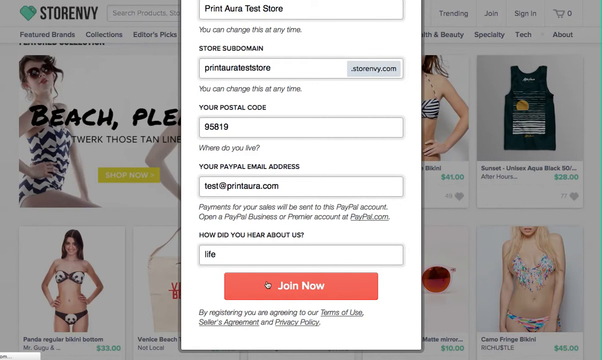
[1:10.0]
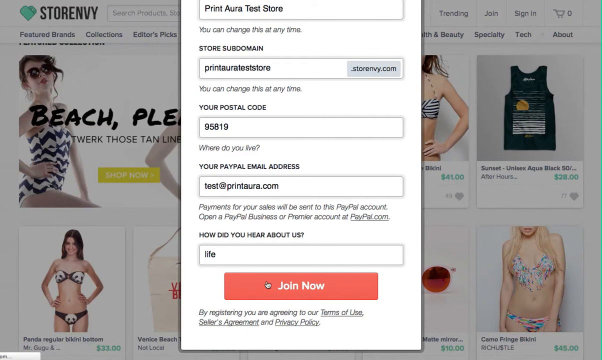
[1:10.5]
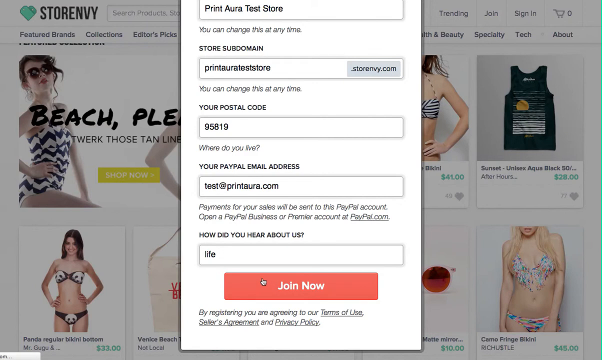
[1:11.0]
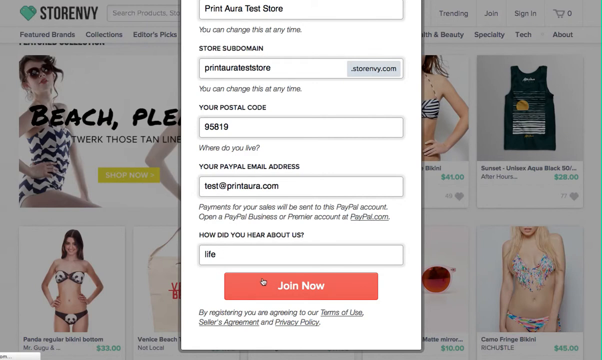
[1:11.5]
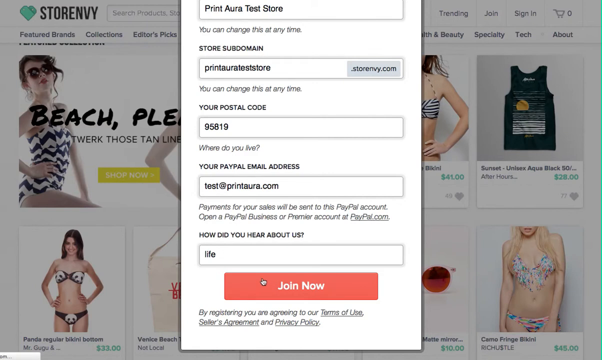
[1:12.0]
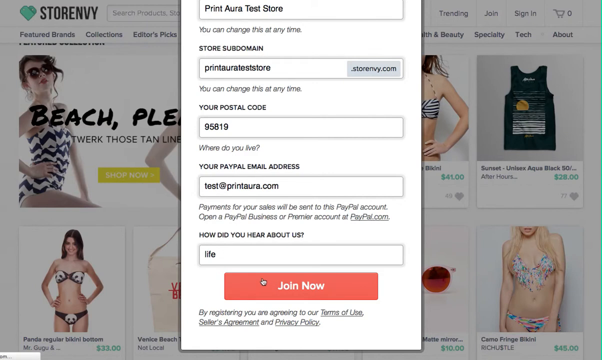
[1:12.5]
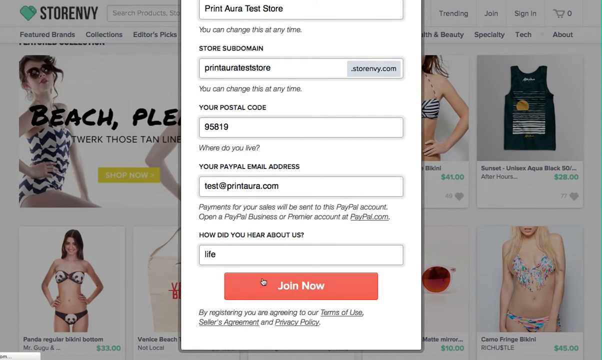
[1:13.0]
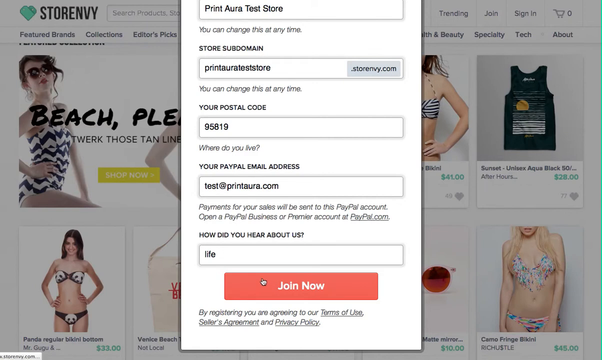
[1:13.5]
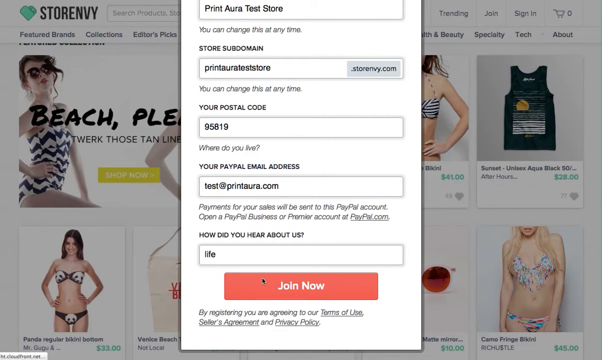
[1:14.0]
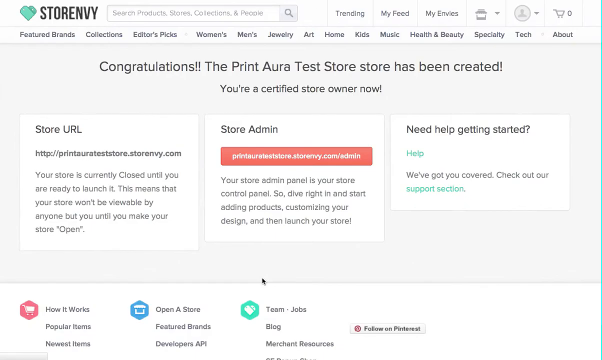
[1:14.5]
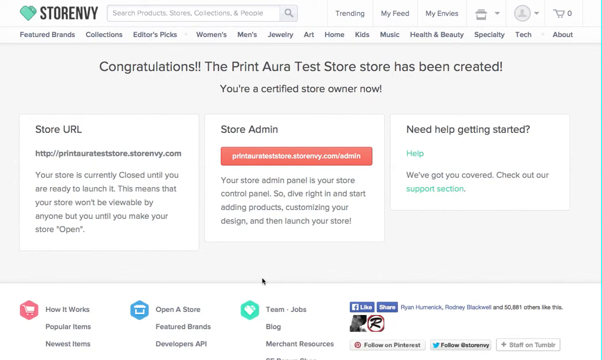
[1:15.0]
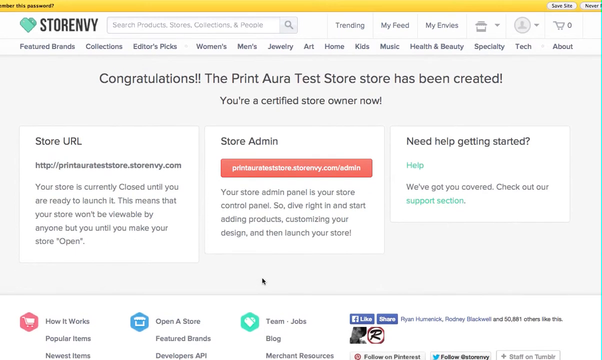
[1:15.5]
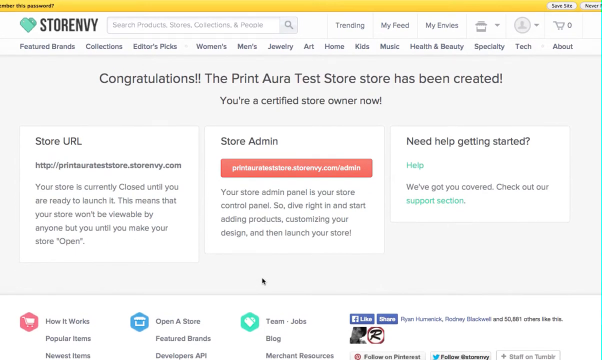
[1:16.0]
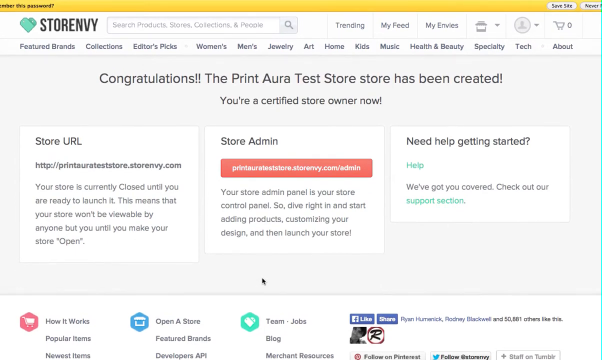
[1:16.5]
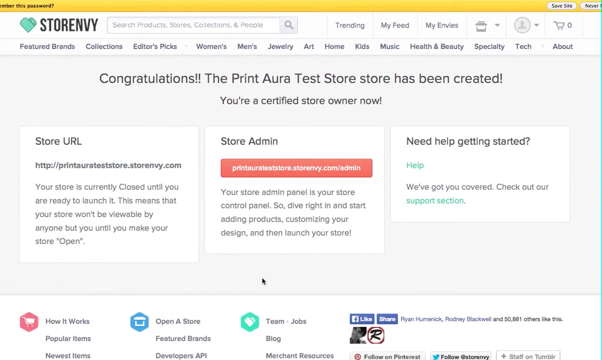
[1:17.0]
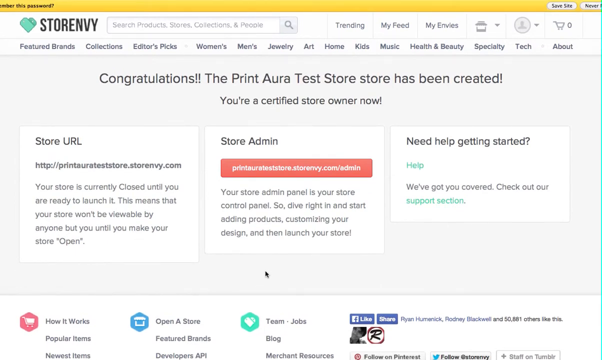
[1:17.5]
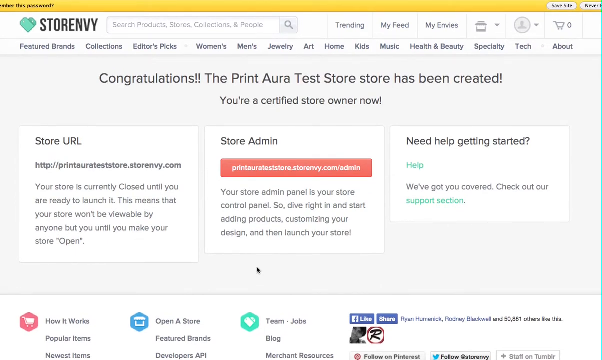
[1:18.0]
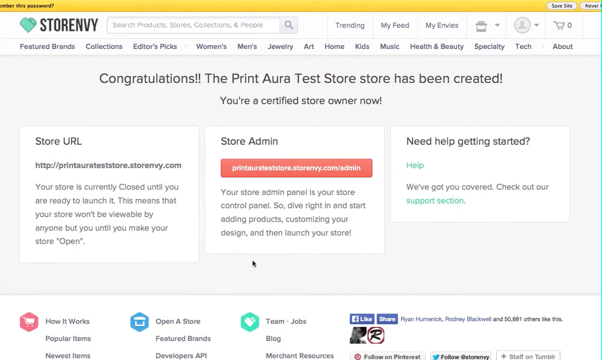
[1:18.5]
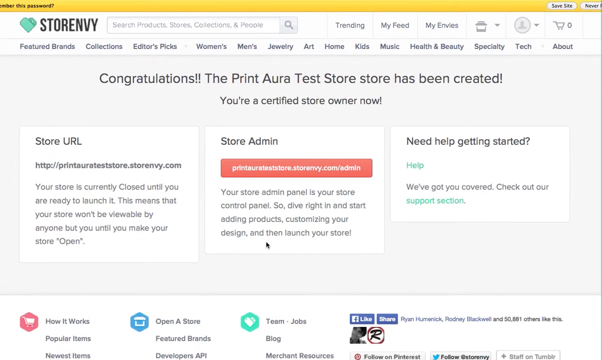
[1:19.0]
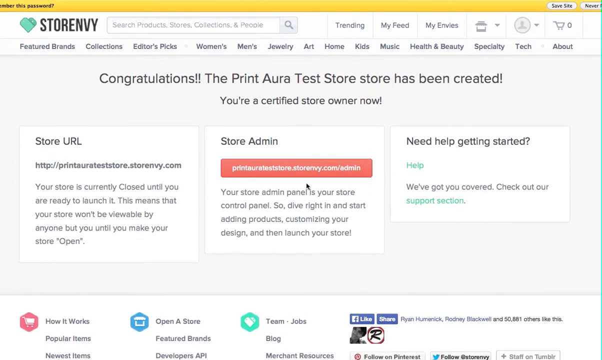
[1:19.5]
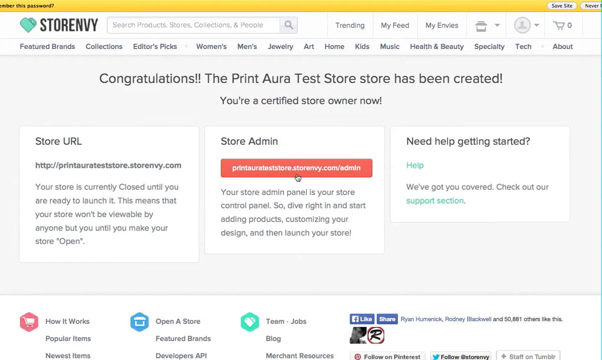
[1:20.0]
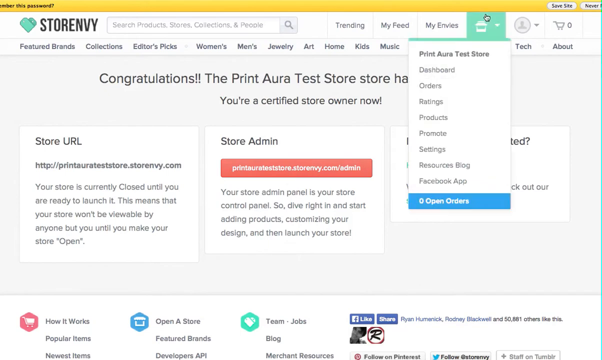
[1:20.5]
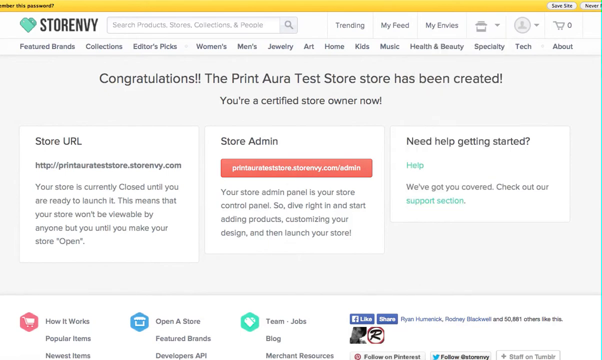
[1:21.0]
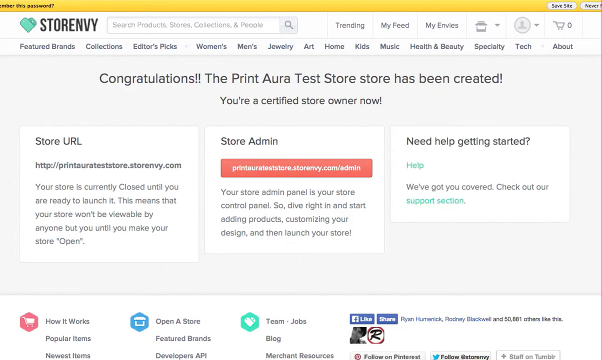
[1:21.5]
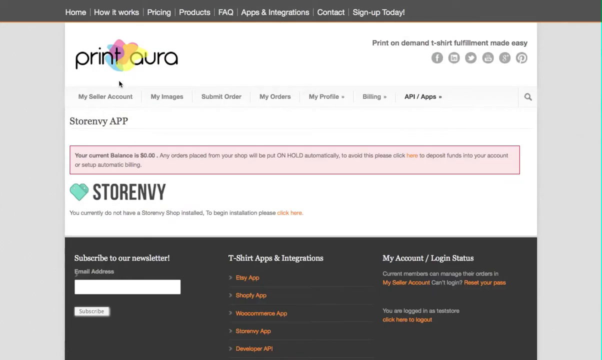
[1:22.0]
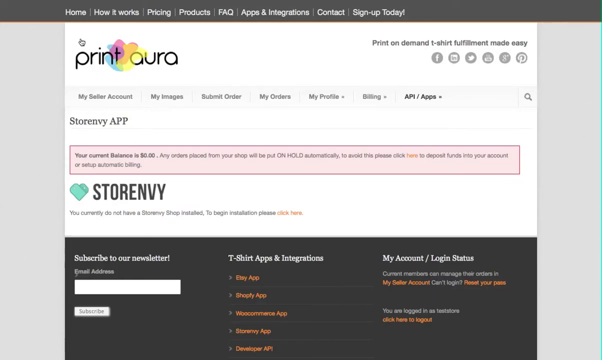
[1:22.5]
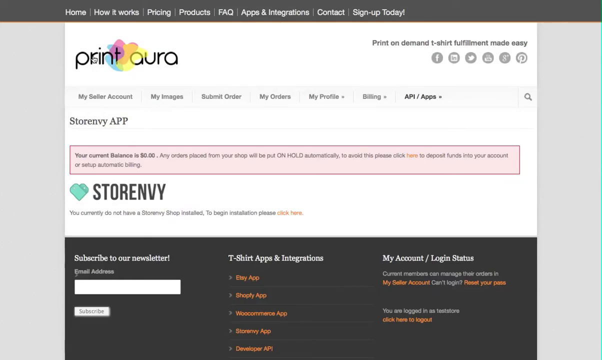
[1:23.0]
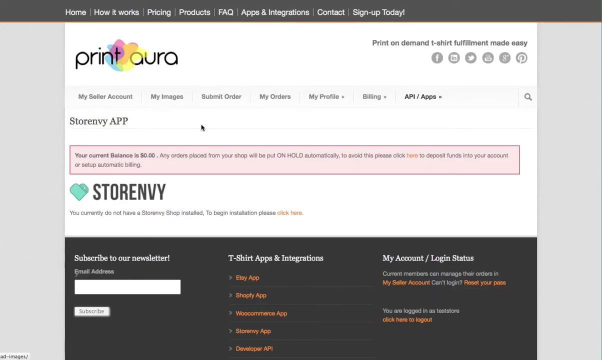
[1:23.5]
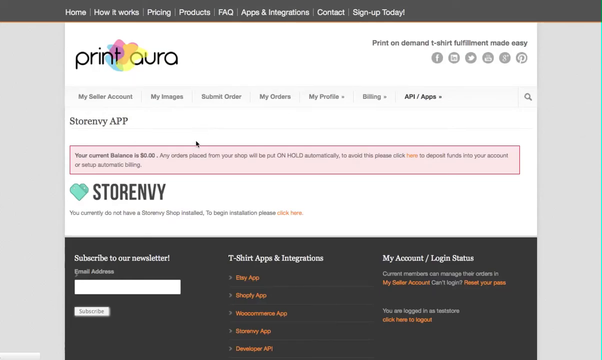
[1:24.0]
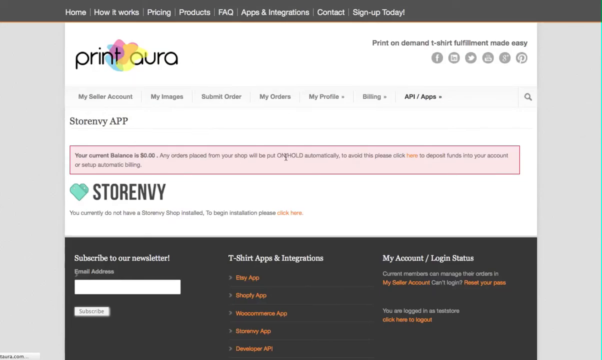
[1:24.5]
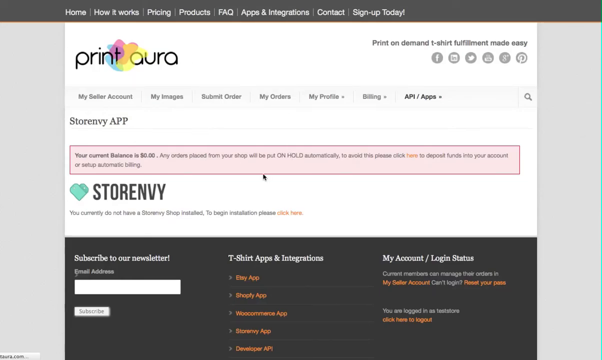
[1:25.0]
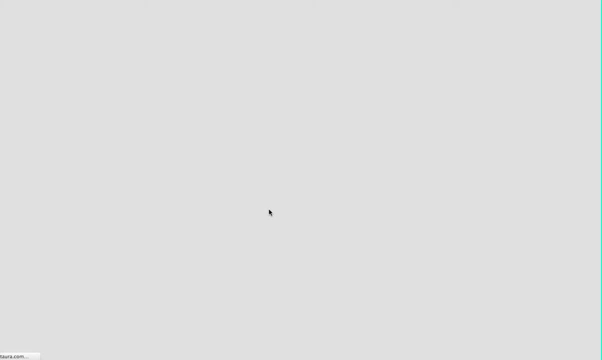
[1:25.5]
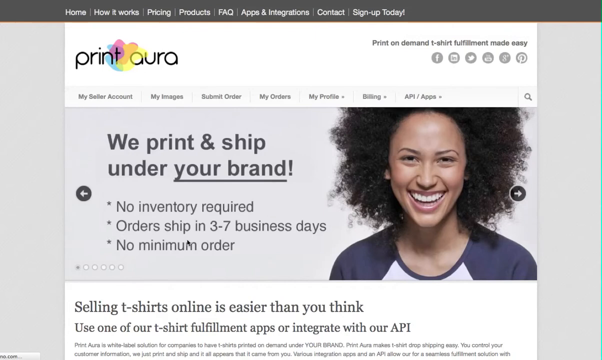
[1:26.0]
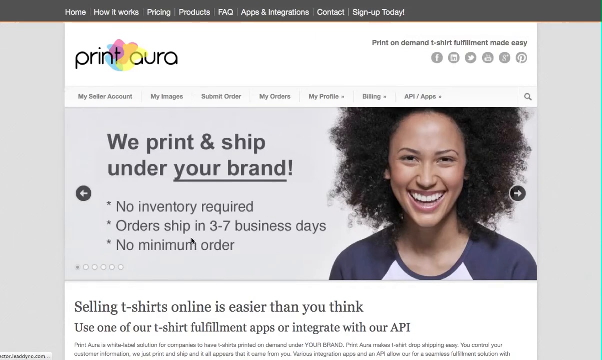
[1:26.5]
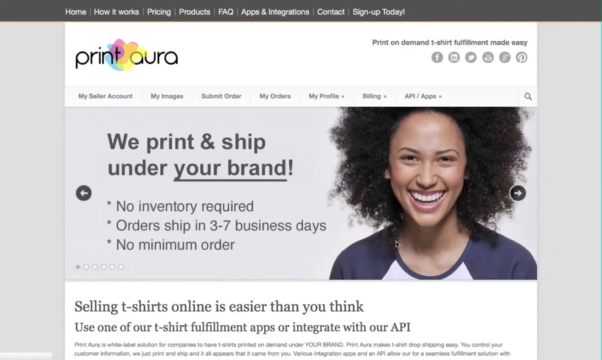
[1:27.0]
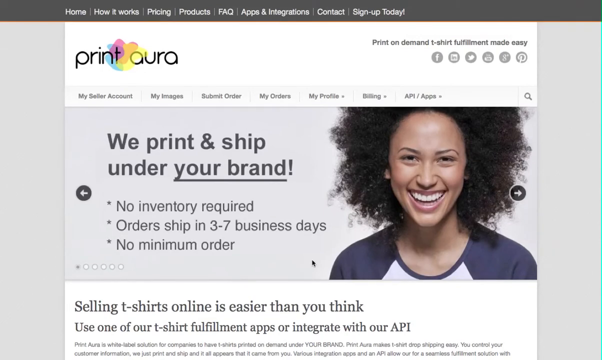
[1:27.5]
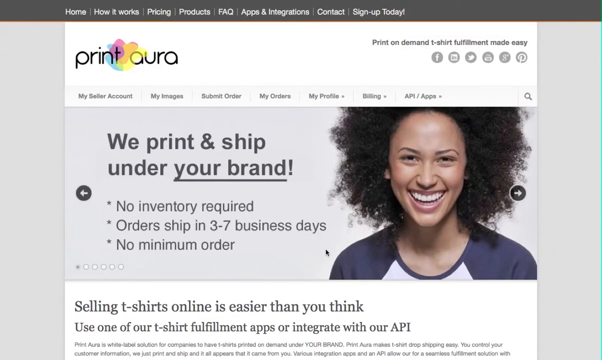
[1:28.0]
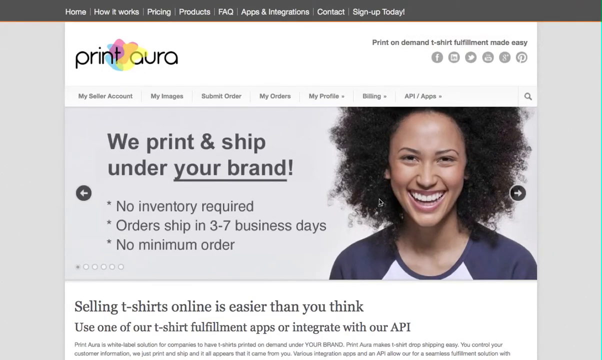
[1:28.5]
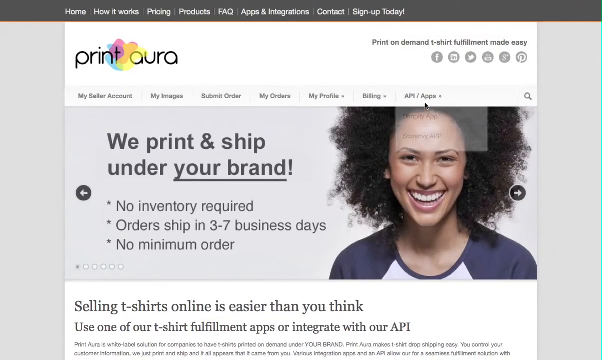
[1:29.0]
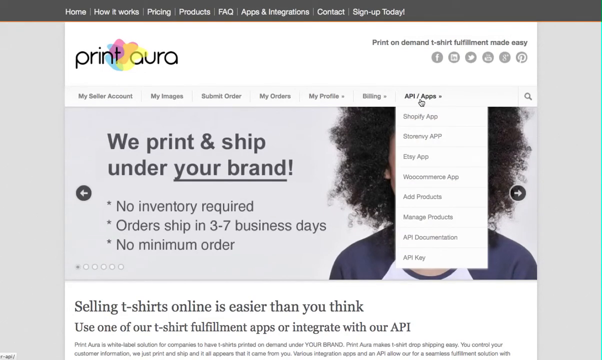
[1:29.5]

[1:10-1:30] After the user presses the join button, a new page of the website appears, reading "congratulations, the PrintAura test store has been created!" and beneath it "you're a certified store owner now." Below are three columns of text titled "store URL," "store admin" and "need help getting started." Under the store URL column is the URL and the text "your store is currently closed until you're ready to launch it. This means that your store won't be available by anyone until you make your store open." Under store admin is a red box containing a URL ending in admin, and the text "your store admin panel is your store control panel. So dive right in and start adding products, customizing your design, and then launch your store." On the right-hand side, under "need help getting started" with "help" in green text, it reads "we've got you covered. Check out our support section," with "support section" in green. The user scrolls up the page slightly and moves the mouse around a bit. Next the user appears to be on the PrintAura website. The PrintAura logo at the top left is in black text with yellow multi-colors in its center. A red box reads "store envy app" and "your current balance is zero," and the Store Envy logo is underneath. At the bottom is a footer with a black background containing three columns: "subscribe to our newsletter" in white text, "t-shirt apps and integrations," and "my account" with the login status. Then comes a screenshot of the PrintAura website. A large central banner shows a smiling woman on the right with large hair, wearing a blue and white t-shirt. On the left it reads "we print and ship under your brand," with "your brand" underlined, followed by "no inventory required. Orders ship in three to seven business days" and then "no minimum order." Below the banner it reads "selling t-shirts online is easier than you think. Use one of our t-shirt fulfillment apps or integrate with our API."